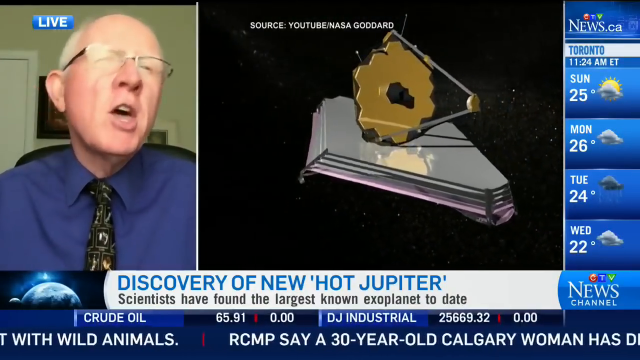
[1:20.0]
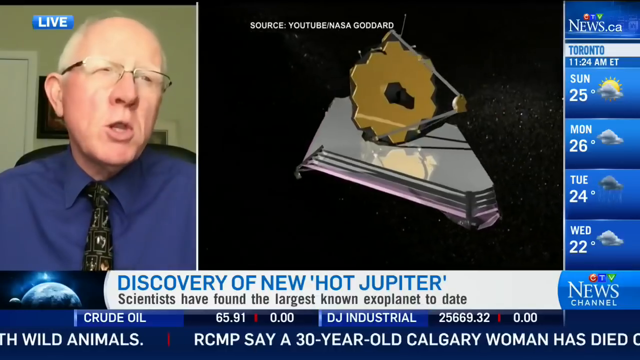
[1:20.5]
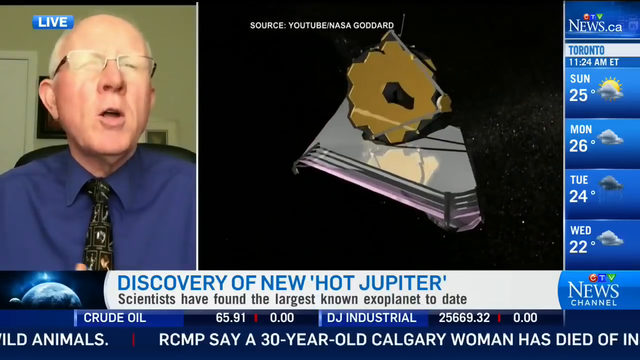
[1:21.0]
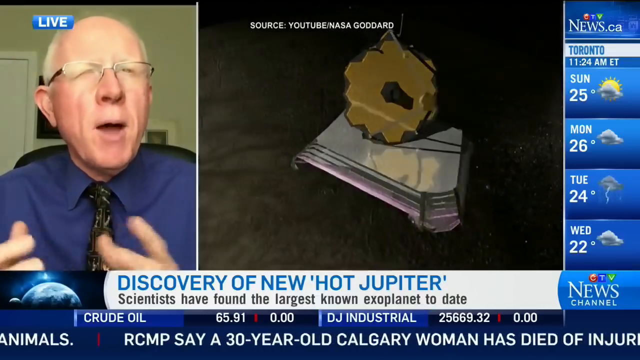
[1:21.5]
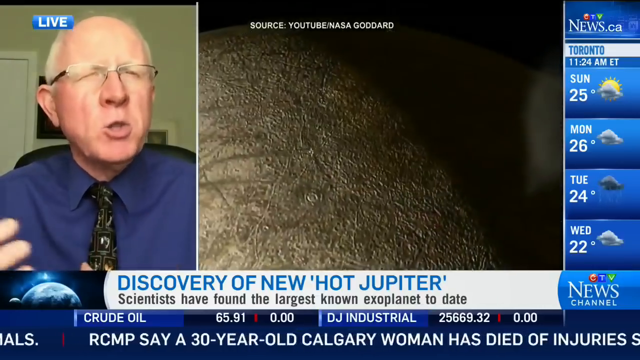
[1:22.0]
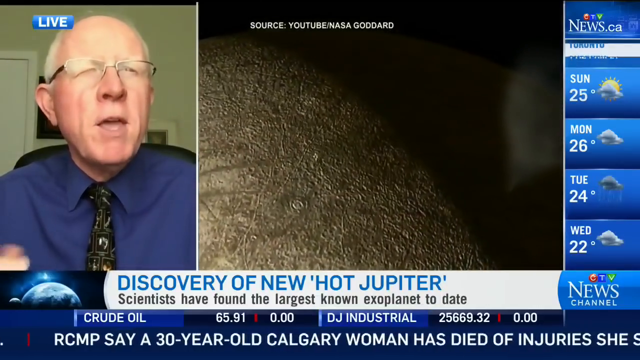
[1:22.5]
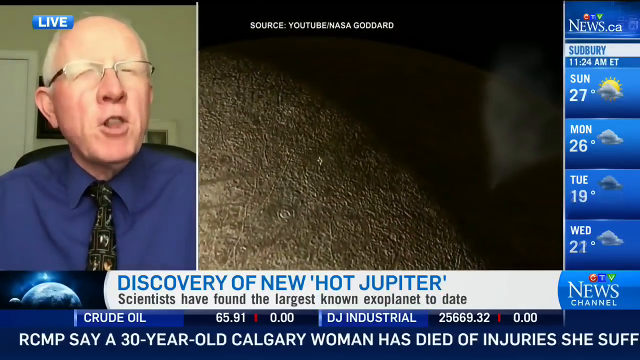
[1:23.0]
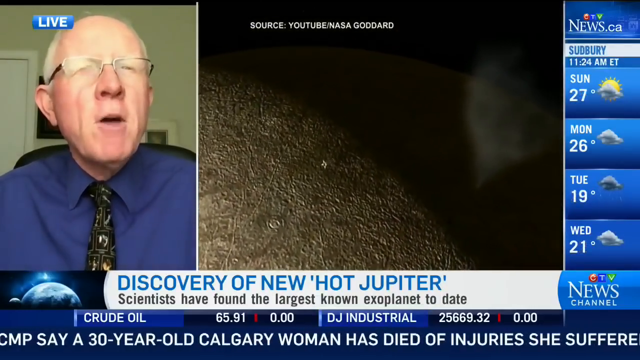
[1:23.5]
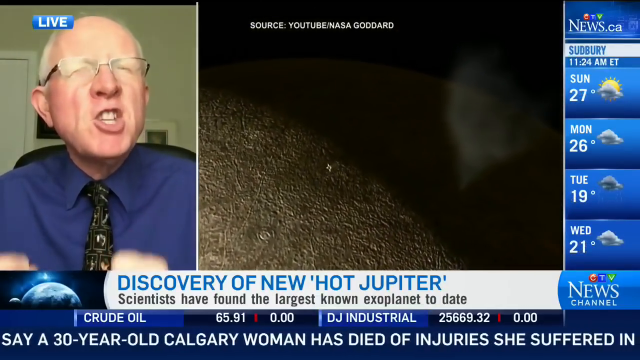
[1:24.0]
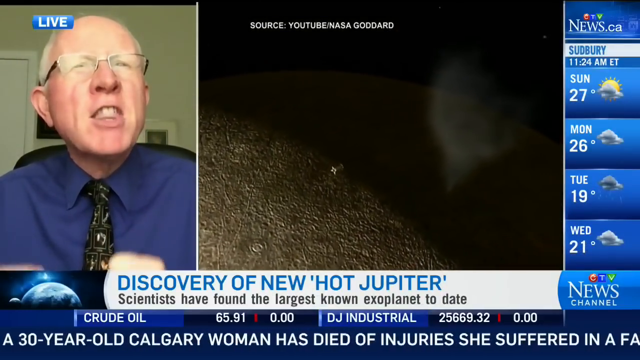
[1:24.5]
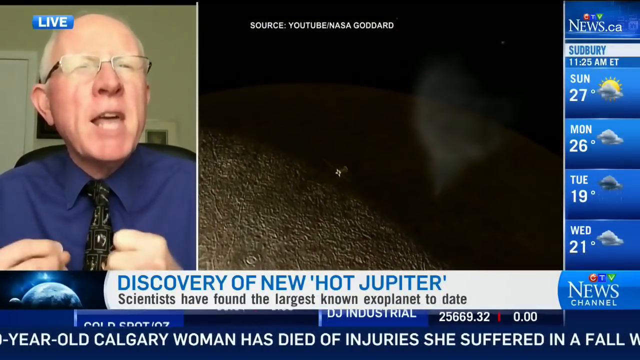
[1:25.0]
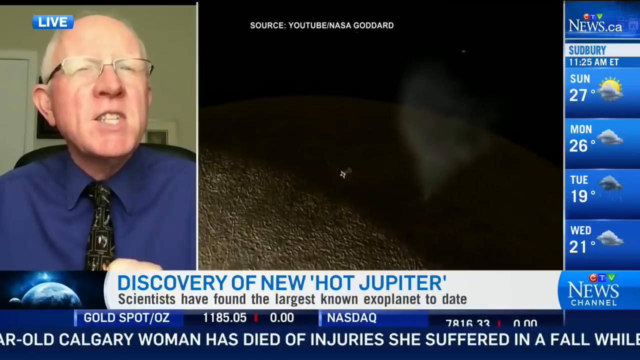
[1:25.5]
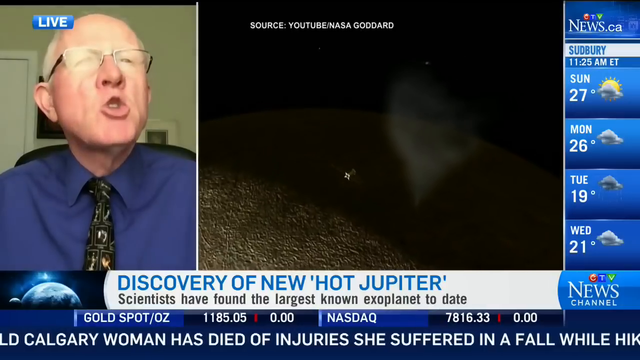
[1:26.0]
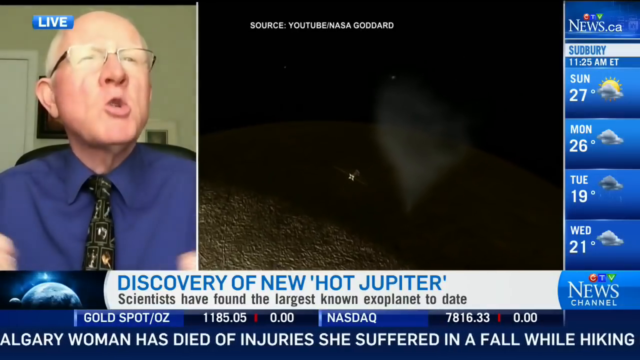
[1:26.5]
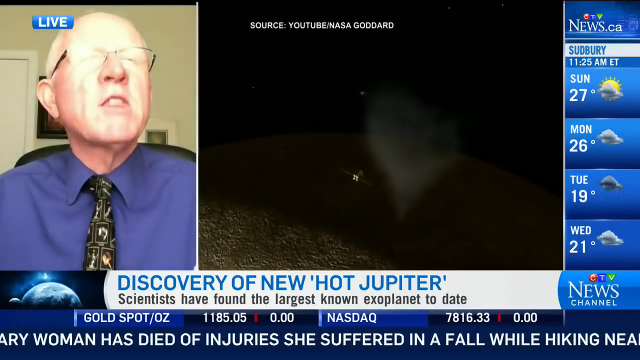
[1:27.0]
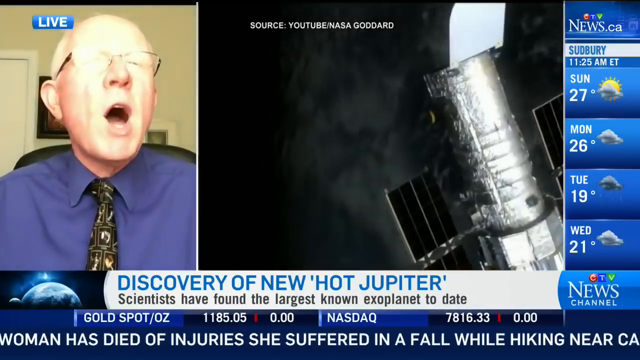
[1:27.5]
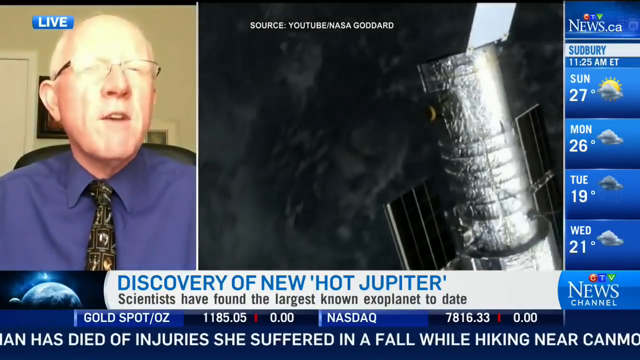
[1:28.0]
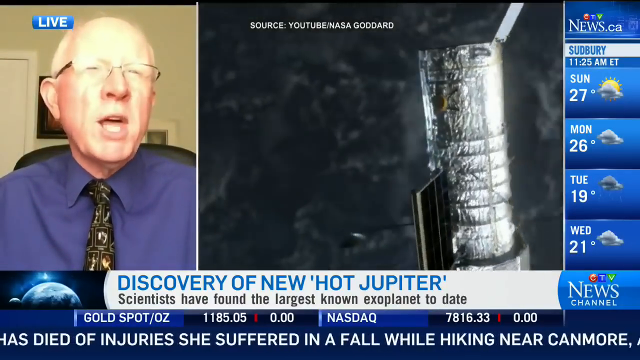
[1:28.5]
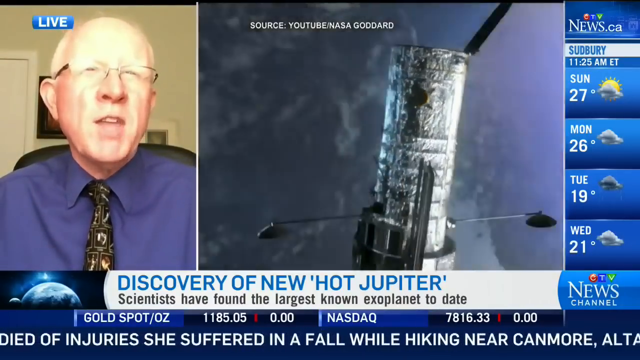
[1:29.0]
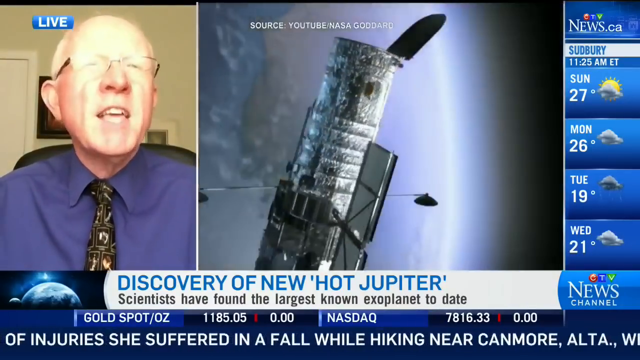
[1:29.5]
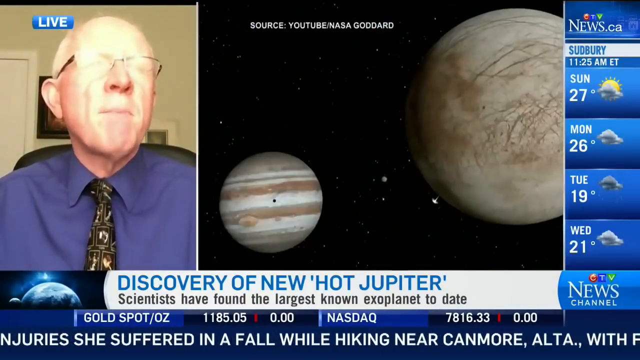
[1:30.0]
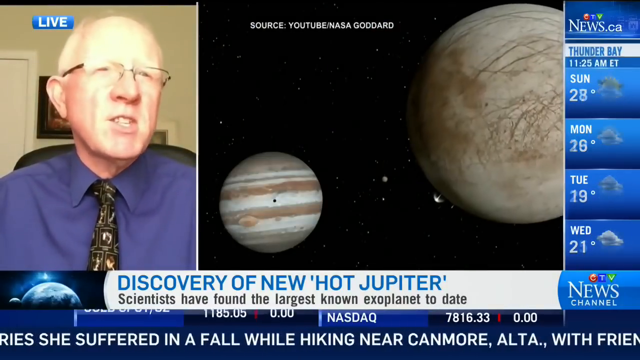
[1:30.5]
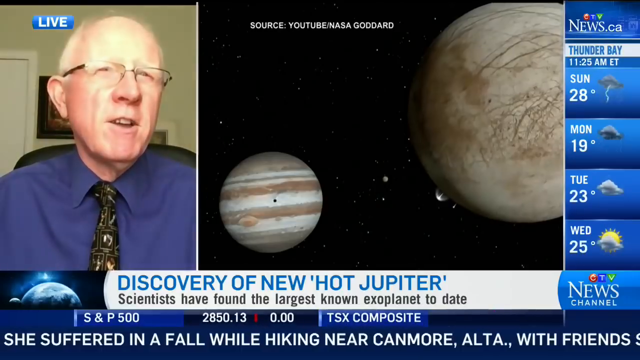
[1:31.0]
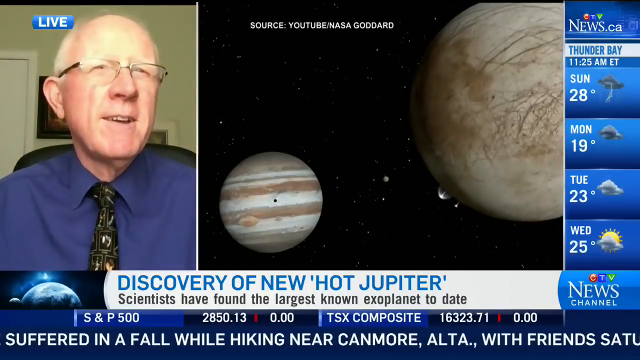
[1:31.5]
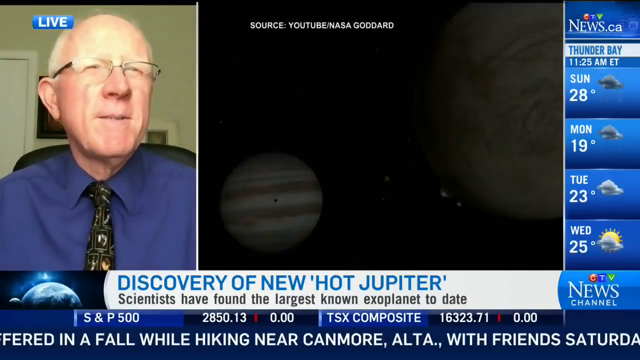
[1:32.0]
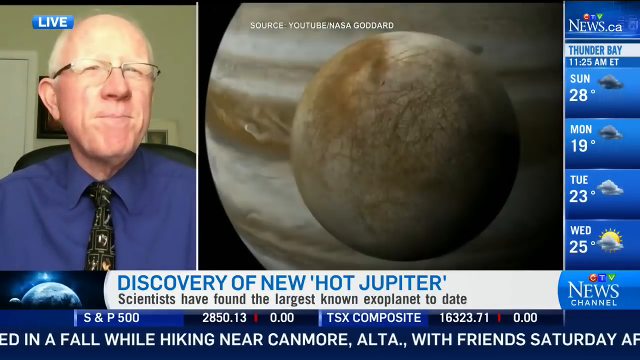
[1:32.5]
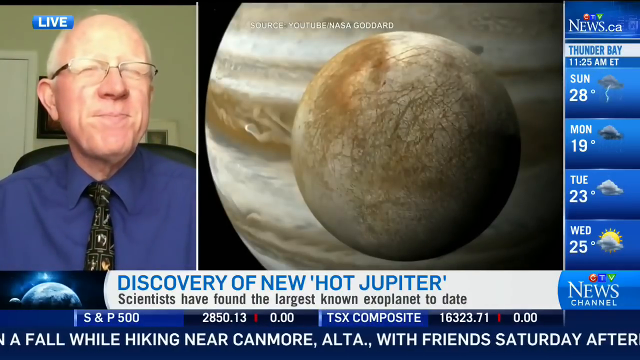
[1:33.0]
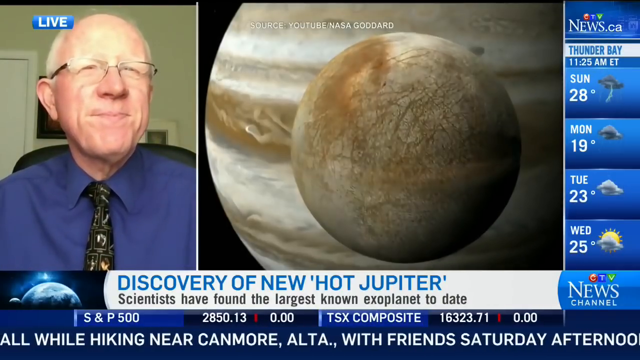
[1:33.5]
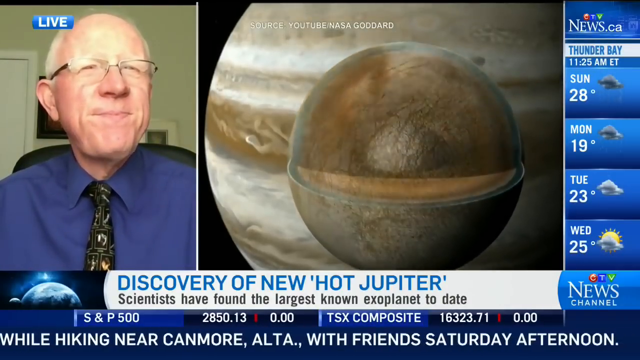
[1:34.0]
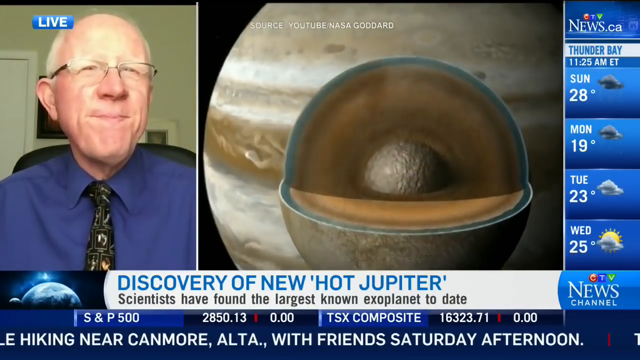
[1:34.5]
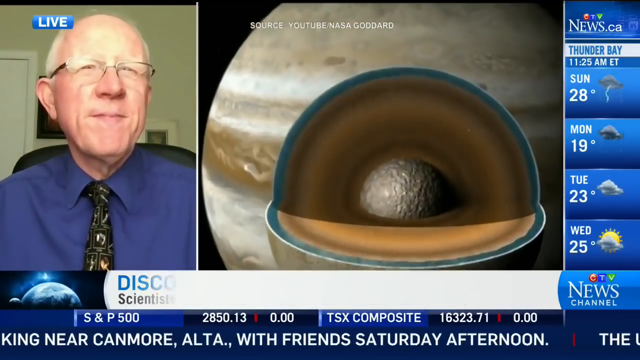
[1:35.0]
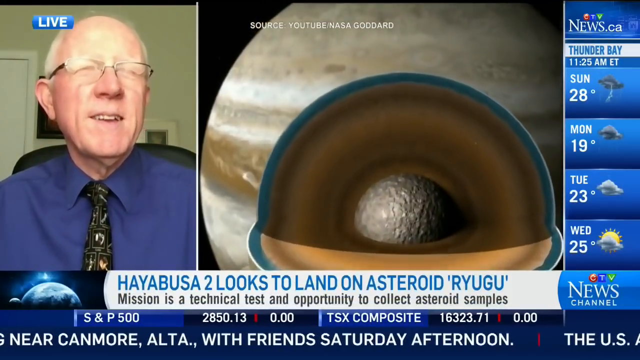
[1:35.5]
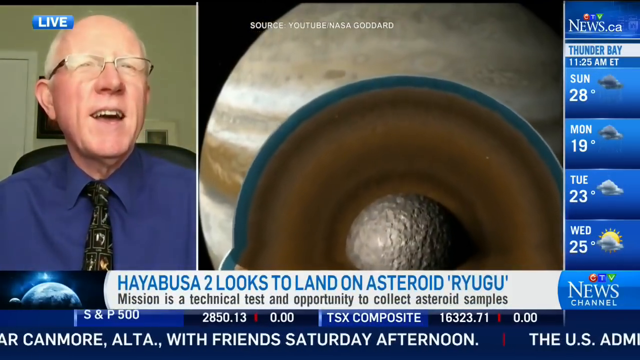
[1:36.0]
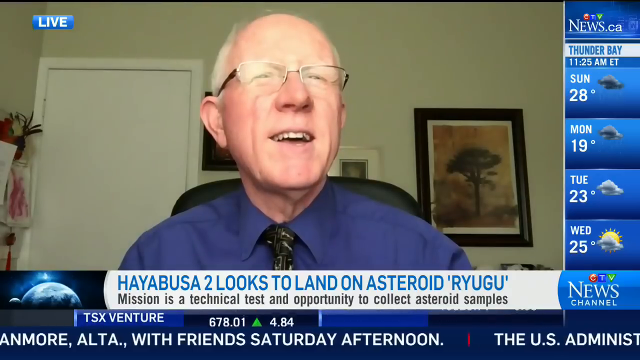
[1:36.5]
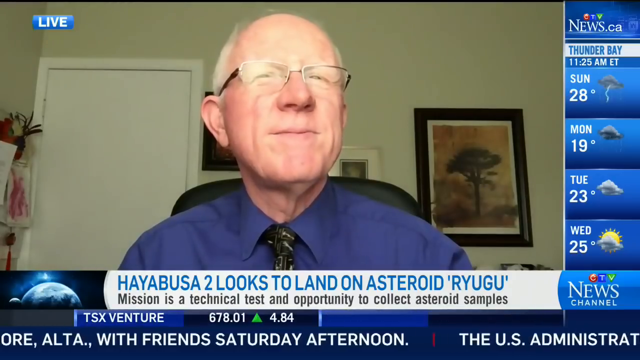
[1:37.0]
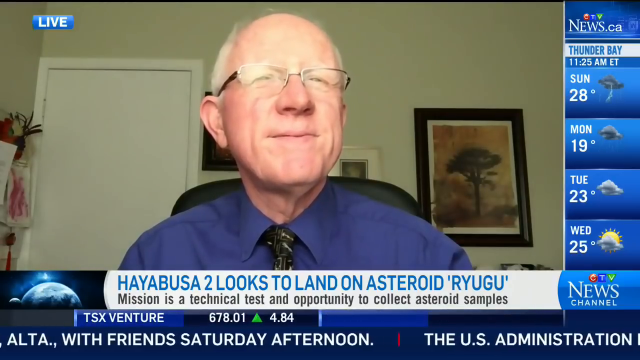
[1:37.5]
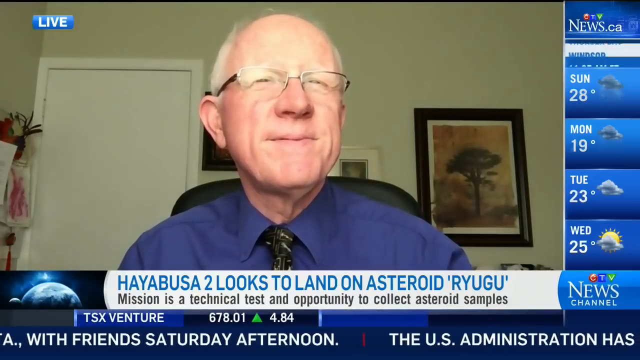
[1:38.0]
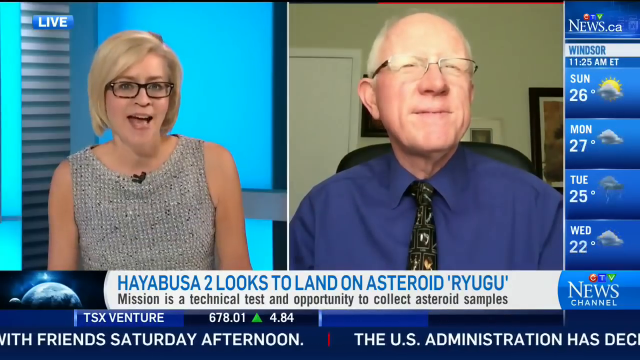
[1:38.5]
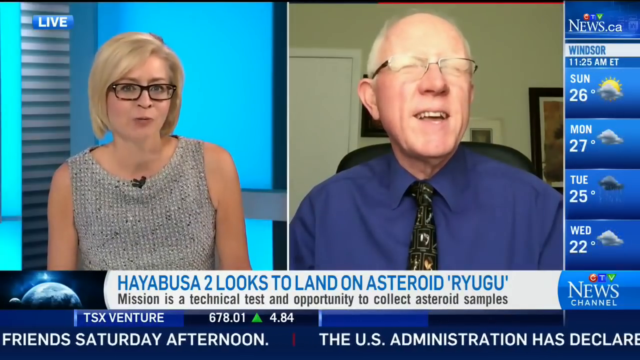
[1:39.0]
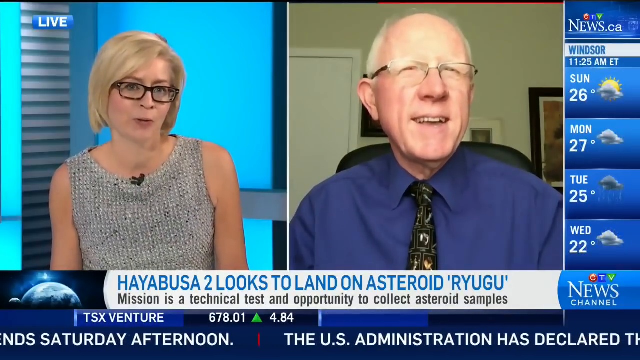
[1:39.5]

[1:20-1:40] As the conversation with Professor Delaney continues, many more images show probes moving through the gases surrounding Jupiter. Professor Delaney smiles broadly as he explains, apparently enjoying his job. Toronto's weather shows sunny intervals and 25 degrees on Sunday, cloudy and 26 degrees on Monday, 24 degrees and cloudy on Tuesday with apparently a chance of a shower, and cloudy and 22 degrees on Wednesday. A news item reports that the Mounties say a 30-year-old Calgary woman has died of injuries suffered in a fall while hiking near Campbell, and that she was with her friends. The forecast for Sudbury shows 27 degrees and sunny intervals on Sunday, cloudy and 26 degrees on Monday, very cloudy and 19 degrees on Tuesday, and 21 degrees and cloudy on Wednesday. Thunder Bay's weather shows thunderstorms and 28 degrees on Sunday, showers and 19 degrees on Monday, cloudy and 23 degrees on Tuesday, and sunny intervals and 25 degrees on Wednesday. The segment turns to a space probe intending to land on the asteroid Ryugu, a technical test that will attempt to collect samples from the asteroid.